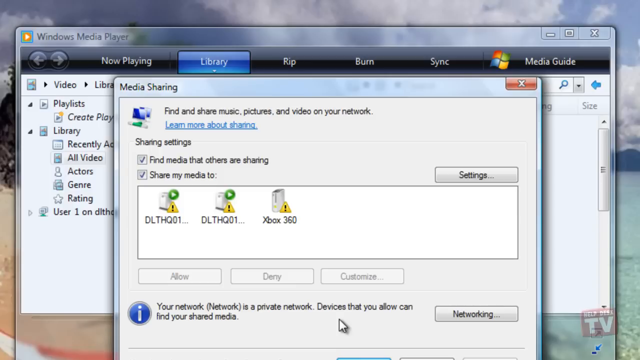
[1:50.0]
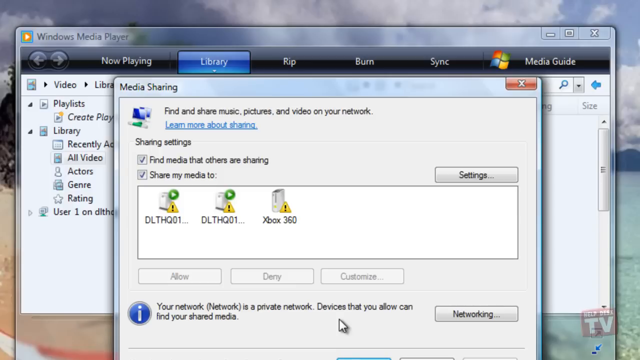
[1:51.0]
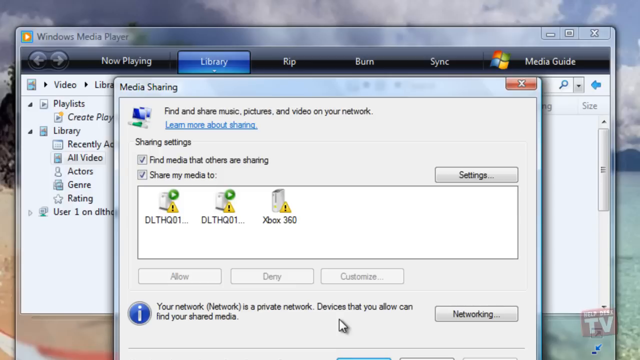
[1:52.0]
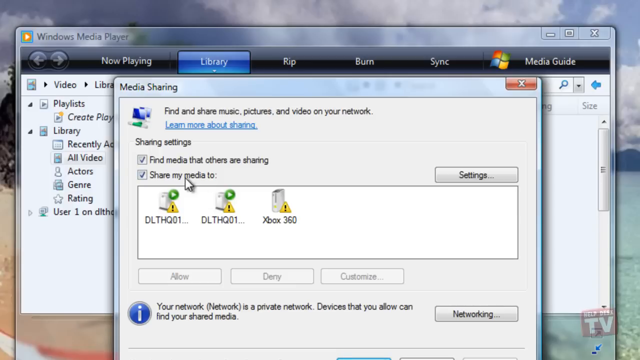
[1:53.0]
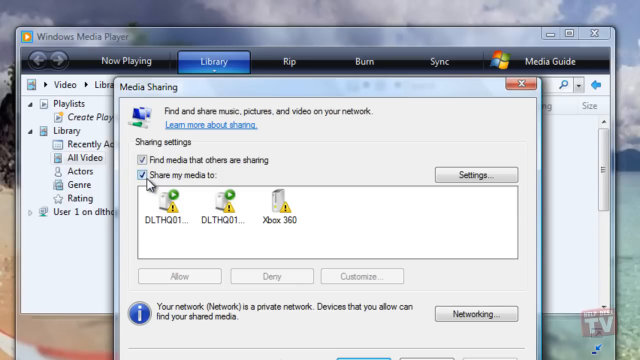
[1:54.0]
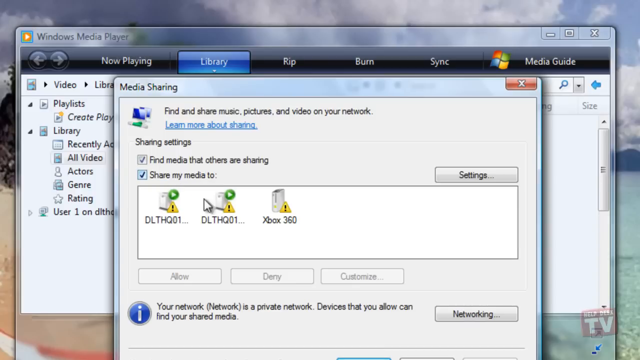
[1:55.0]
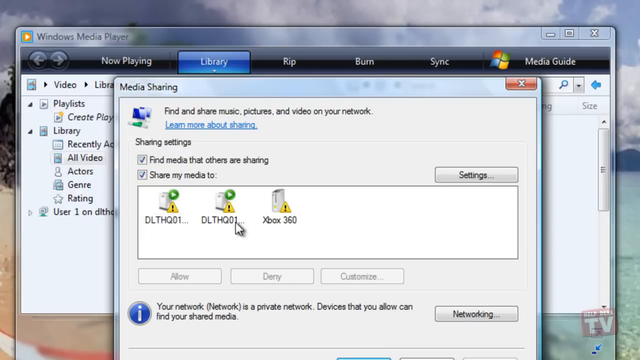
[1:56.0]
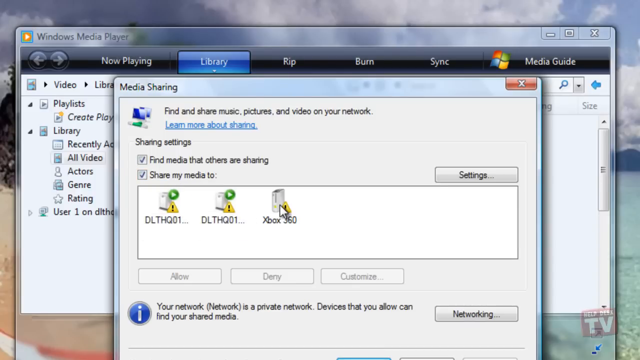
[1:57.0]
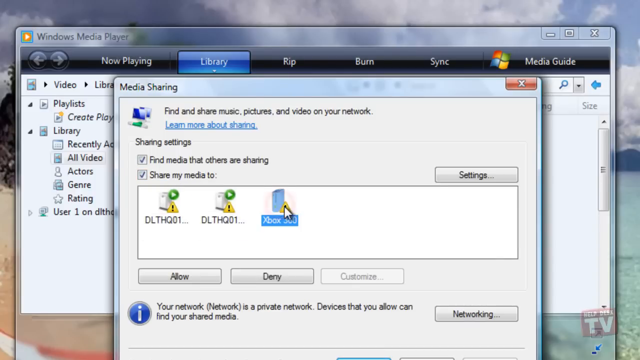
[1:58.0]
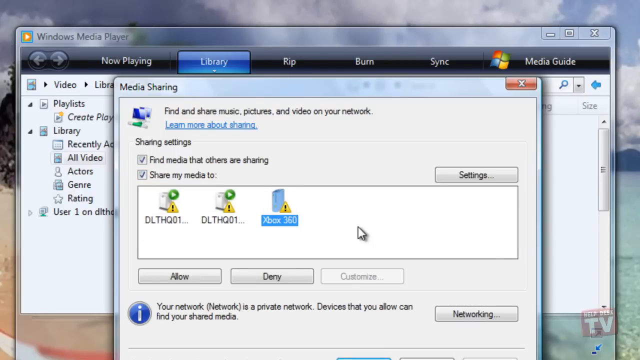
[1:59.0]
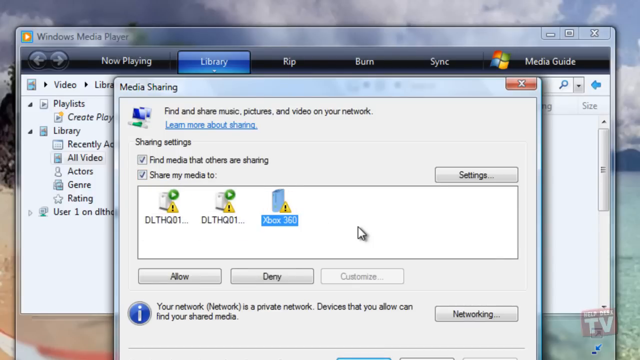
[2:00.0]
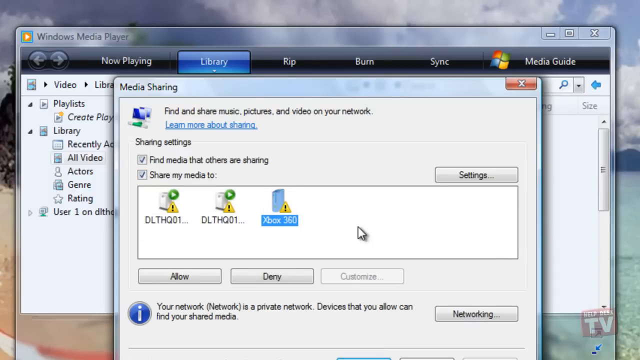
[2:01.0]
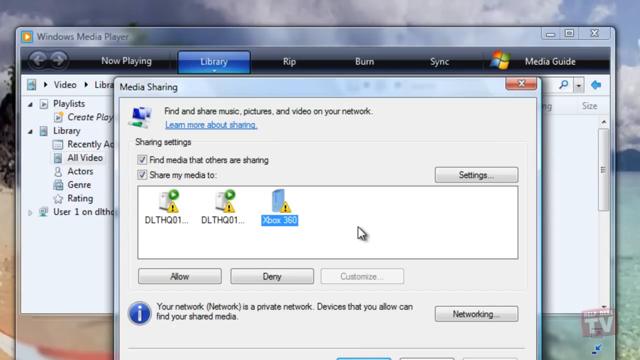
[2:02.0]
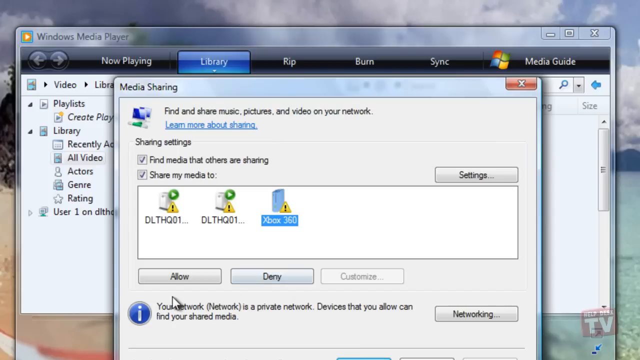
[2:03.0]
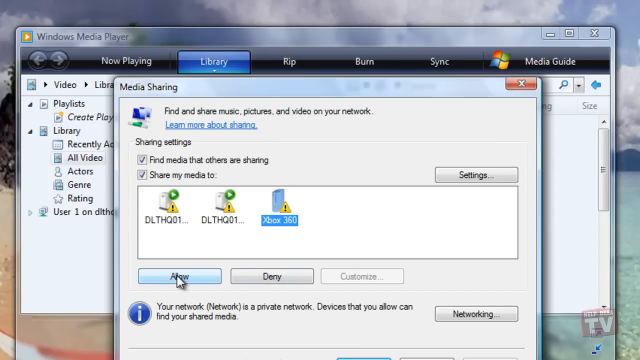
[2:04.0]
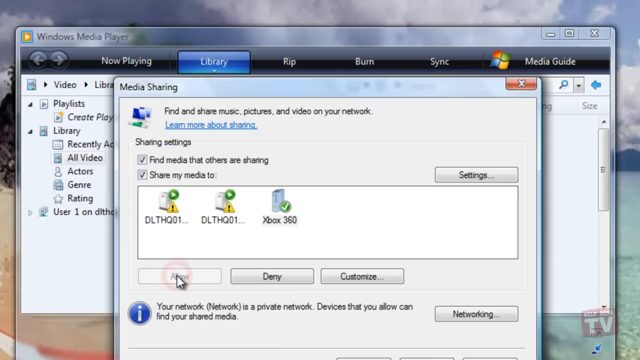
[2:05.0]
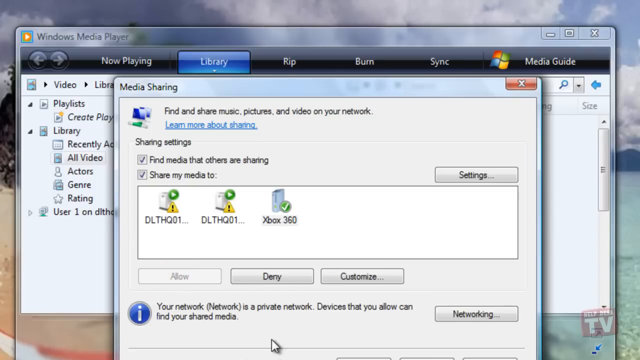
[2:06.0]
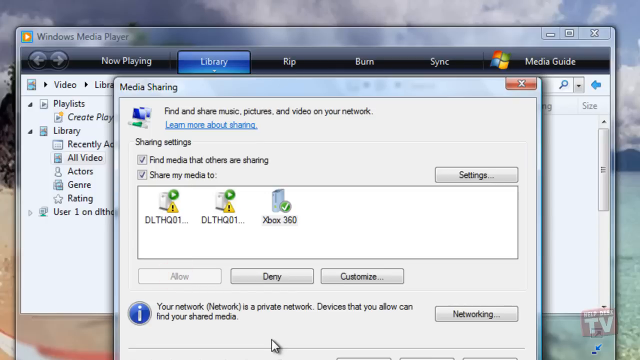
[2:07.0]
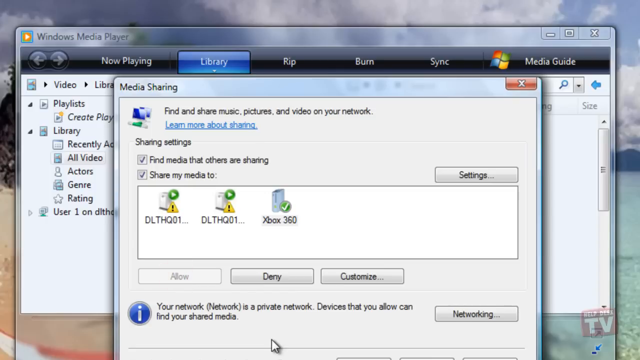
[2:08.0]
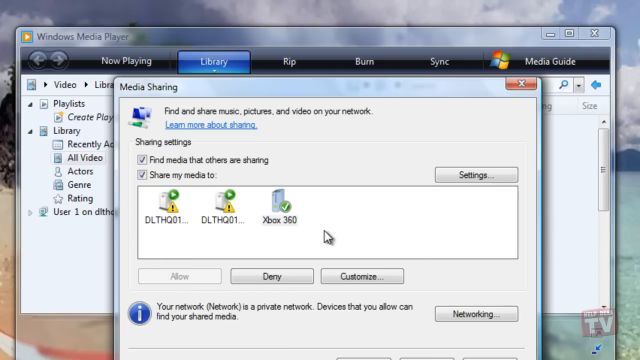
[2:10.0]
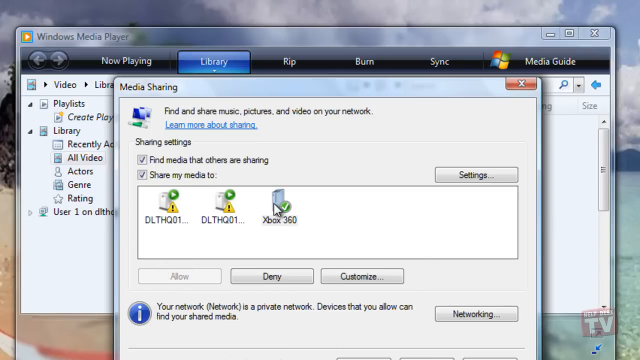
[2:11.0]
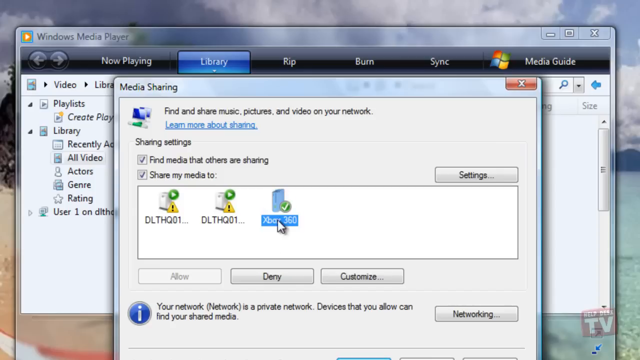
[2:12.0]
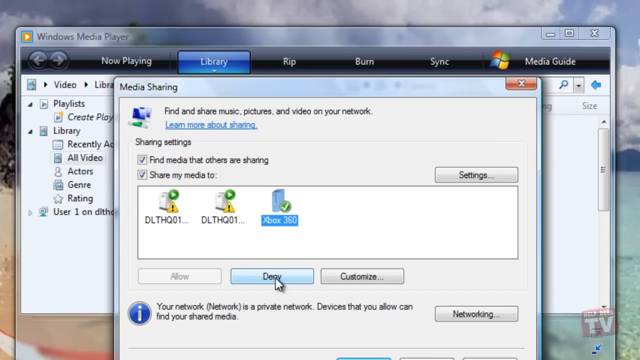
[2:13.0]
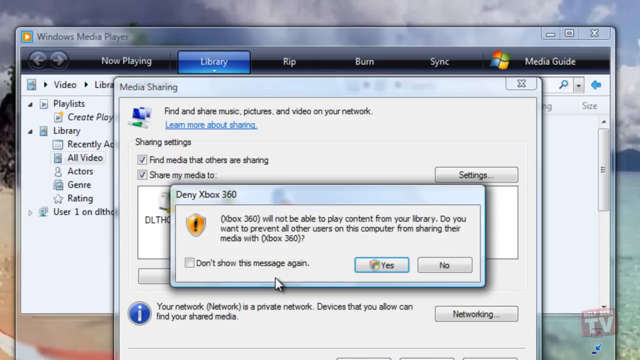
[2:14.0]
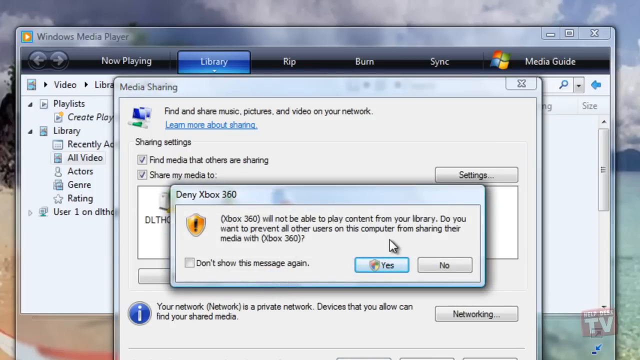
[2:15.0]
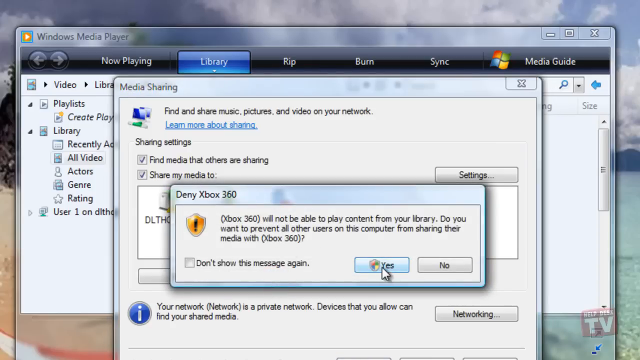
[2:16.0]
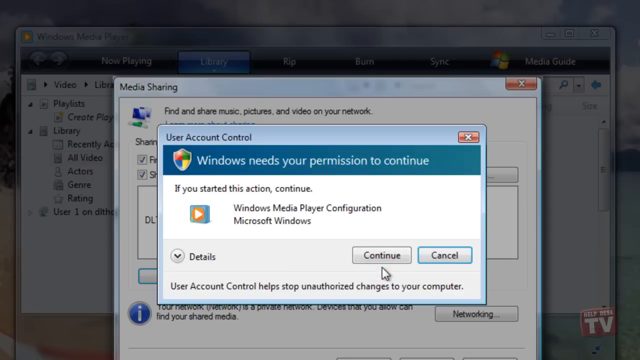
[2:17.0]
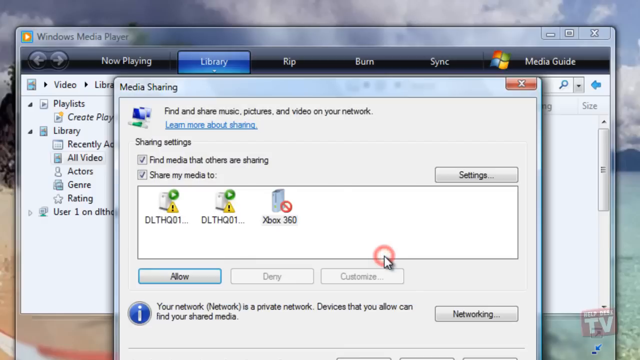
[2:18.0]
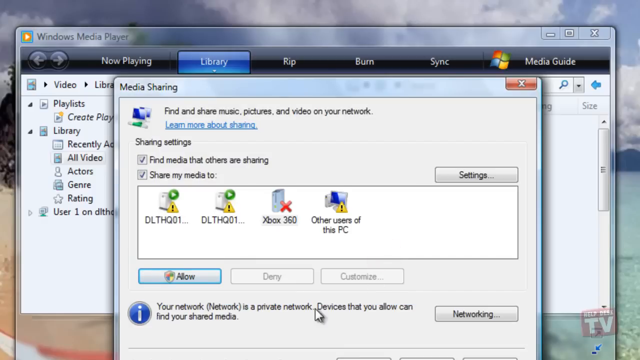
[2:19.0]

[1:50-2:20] The media sharing window remains on screen. He moves the cursor underneath the "share my media to" option as if highlighting it, then hovers over the Xbox 360 icon and clicks it, and it becomes highlighted in blue. The cursor stays in the middle for a moment, then he goes down and clicks "allow". He moves the cursor back up to the 360 and clicks "deny". Another window pops up titled "deny Xbox 360", saying "Xbox 360 will not be able to play content from your library" and "Do you want to prevent all other users on this computer from sharing their media with Xbox 360", with a "do not show this message again" option and buttons for Yes and No. He clicks Yes, and a window saying Windows needs your permission to continue appears; he clicks OK and it goes away. He is back at the media sharing window, with the cursor down in the middle, waiting at the bottom of the window.